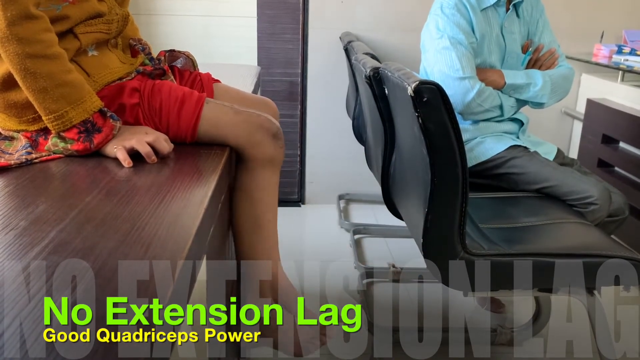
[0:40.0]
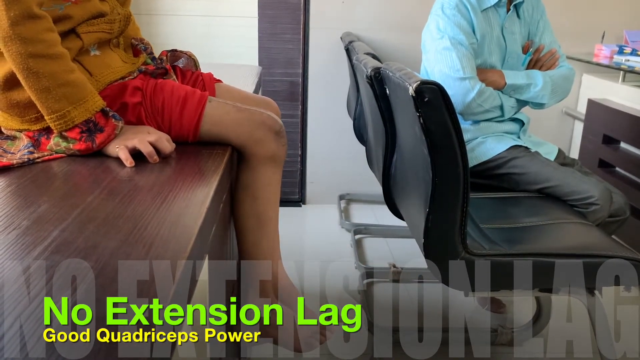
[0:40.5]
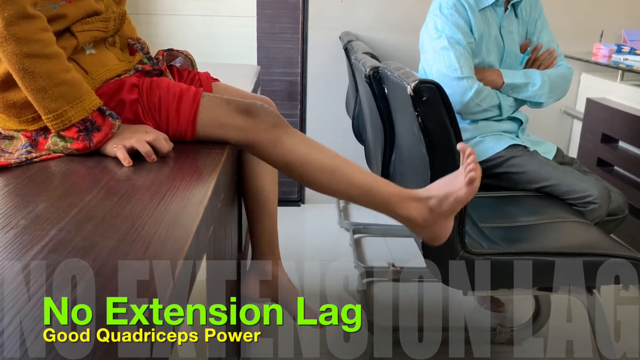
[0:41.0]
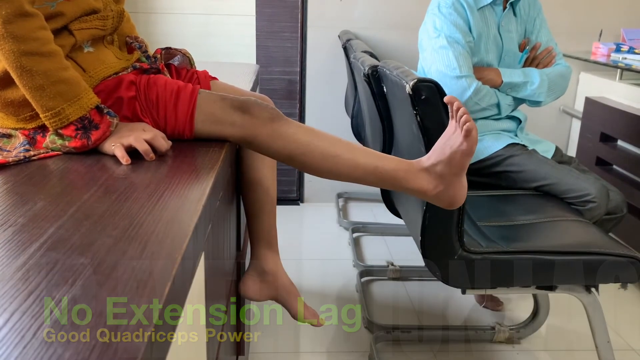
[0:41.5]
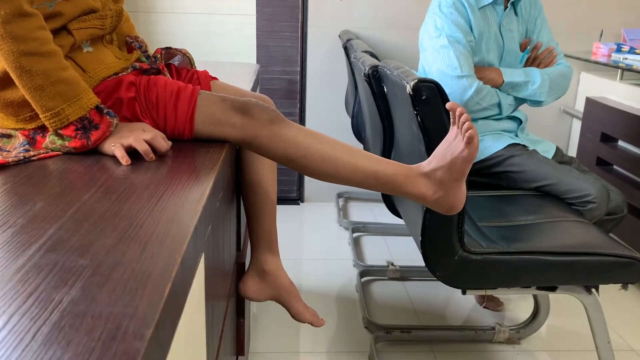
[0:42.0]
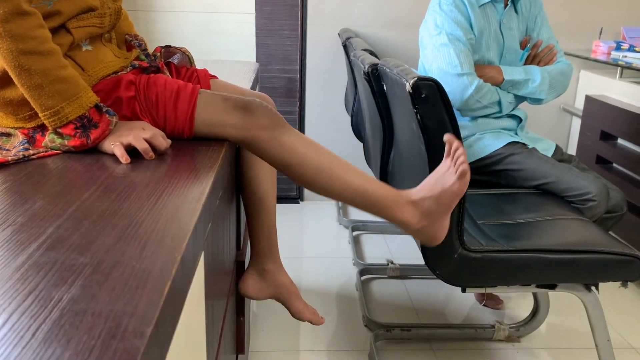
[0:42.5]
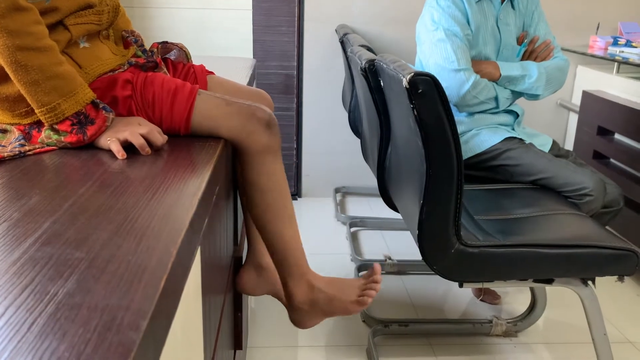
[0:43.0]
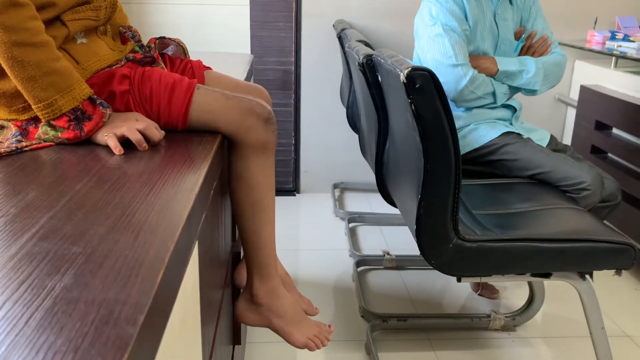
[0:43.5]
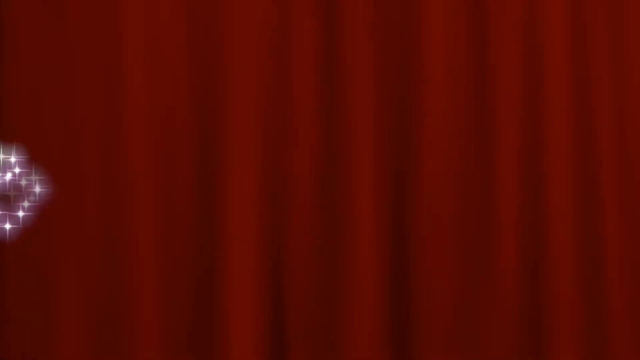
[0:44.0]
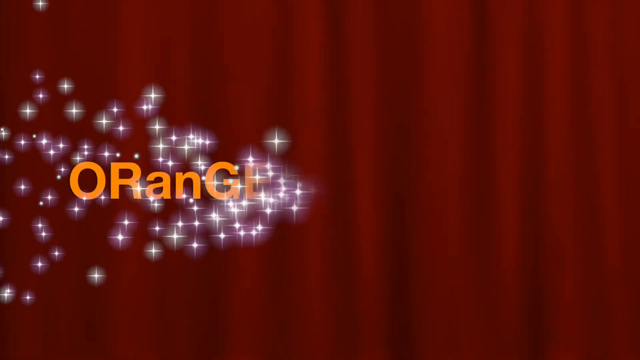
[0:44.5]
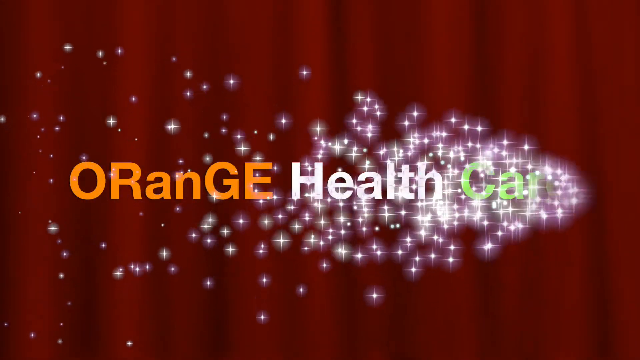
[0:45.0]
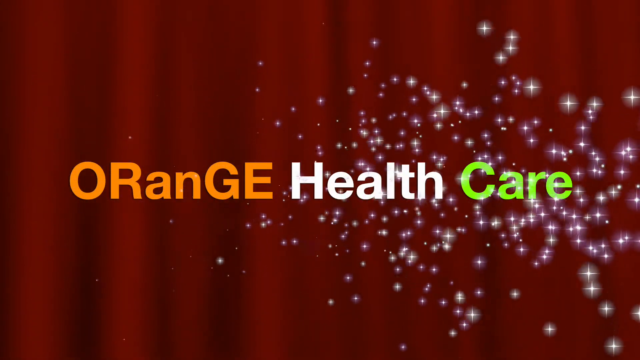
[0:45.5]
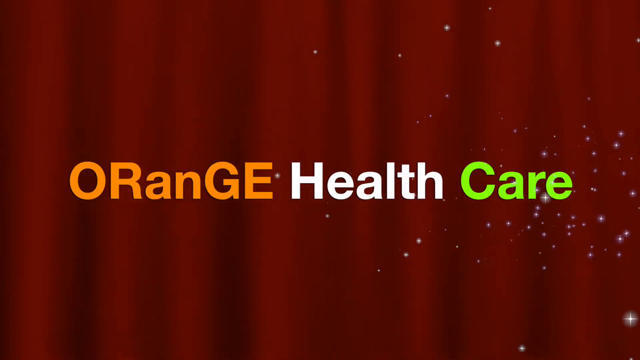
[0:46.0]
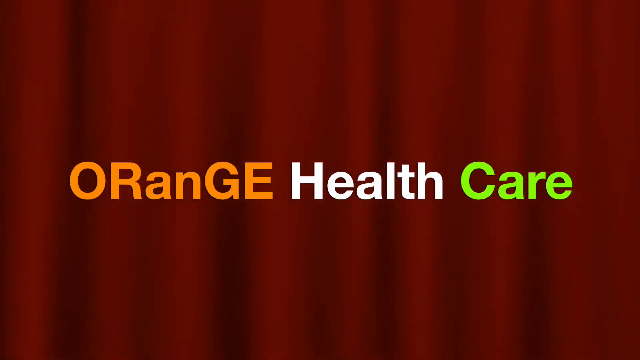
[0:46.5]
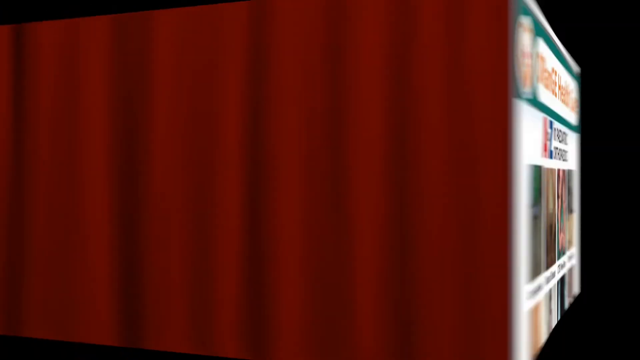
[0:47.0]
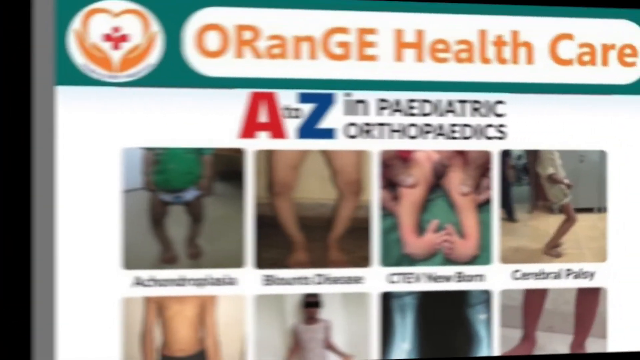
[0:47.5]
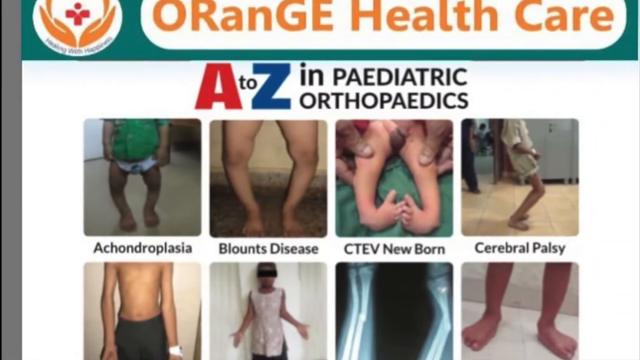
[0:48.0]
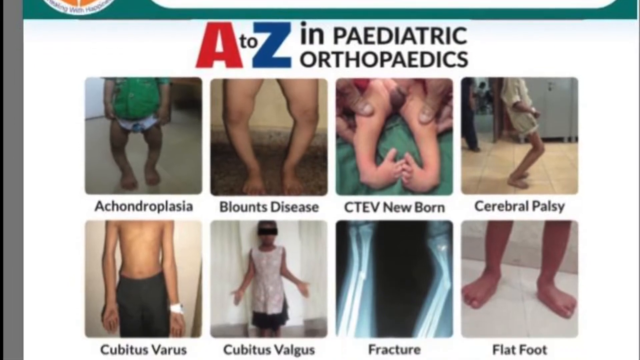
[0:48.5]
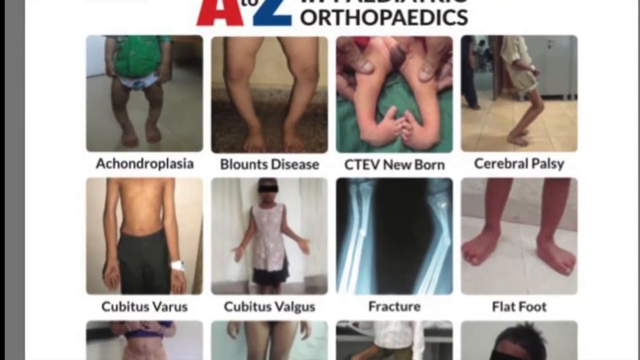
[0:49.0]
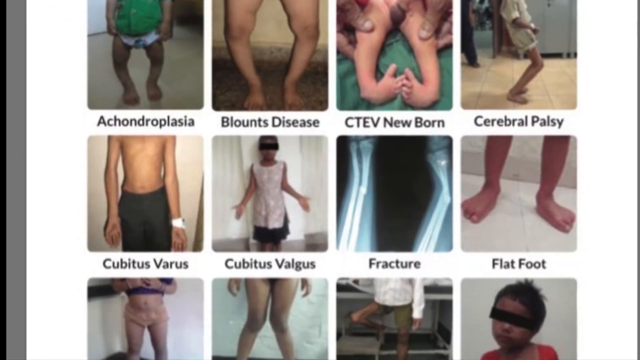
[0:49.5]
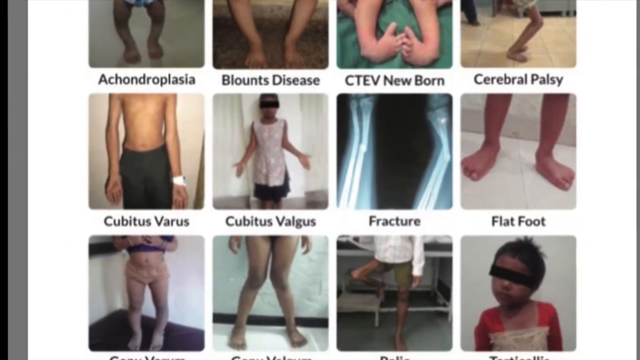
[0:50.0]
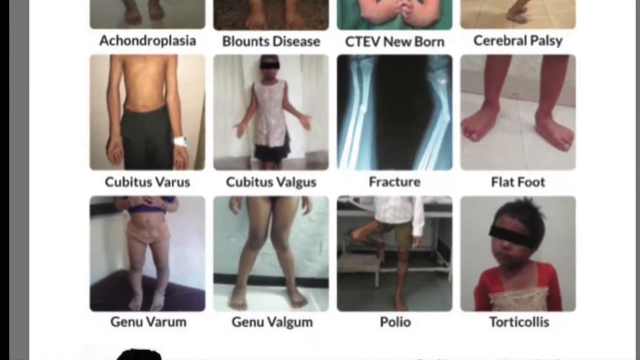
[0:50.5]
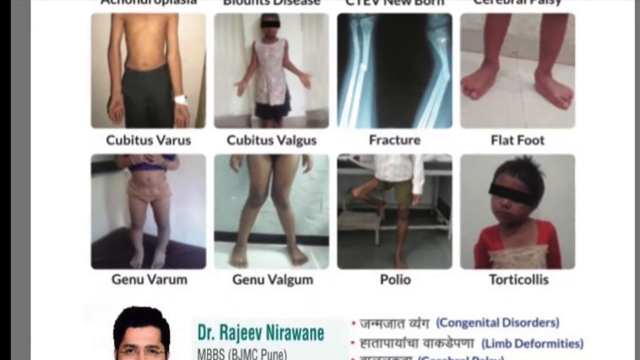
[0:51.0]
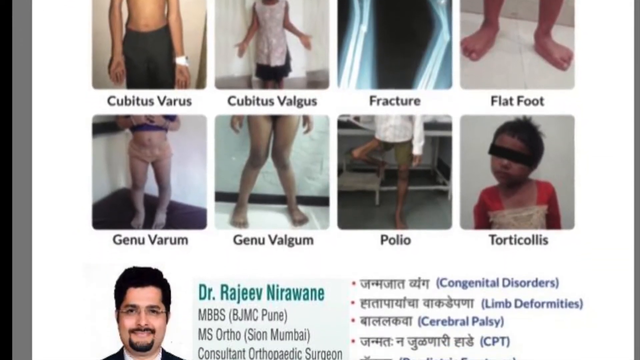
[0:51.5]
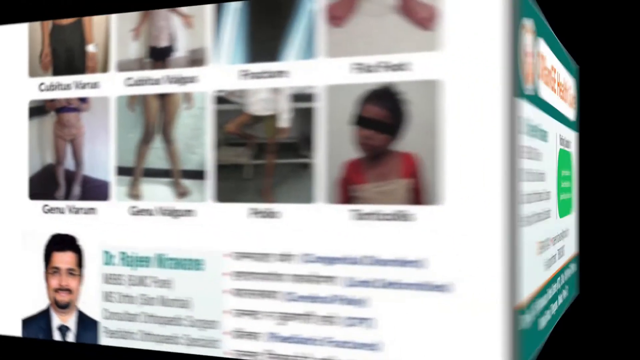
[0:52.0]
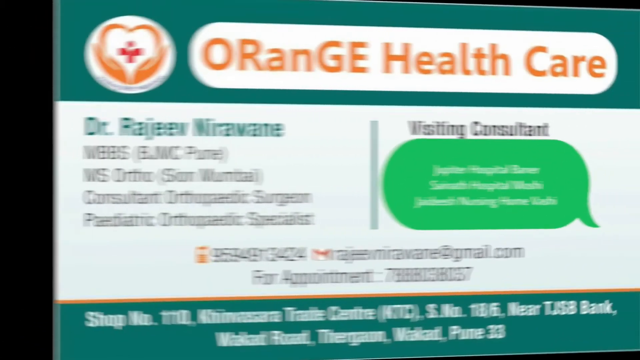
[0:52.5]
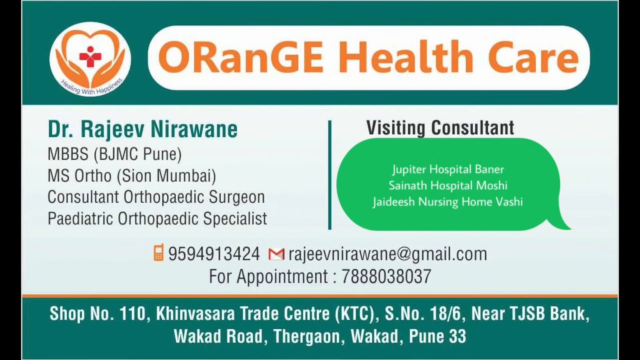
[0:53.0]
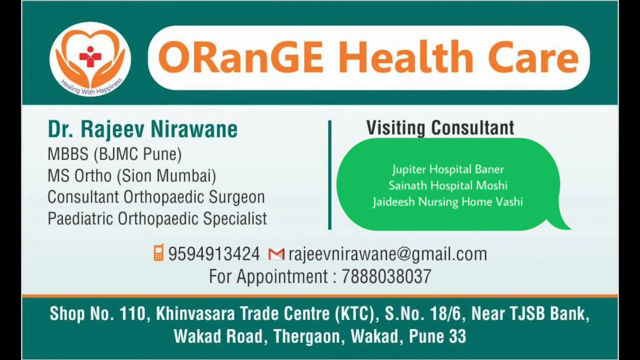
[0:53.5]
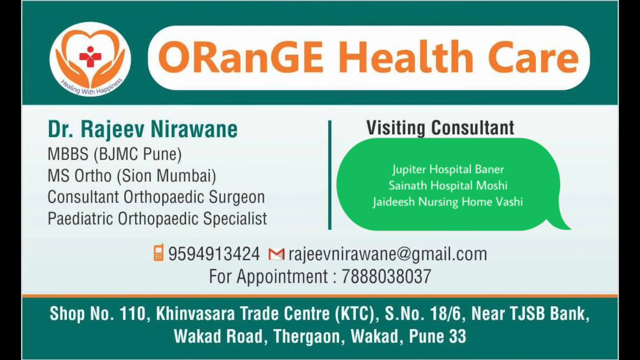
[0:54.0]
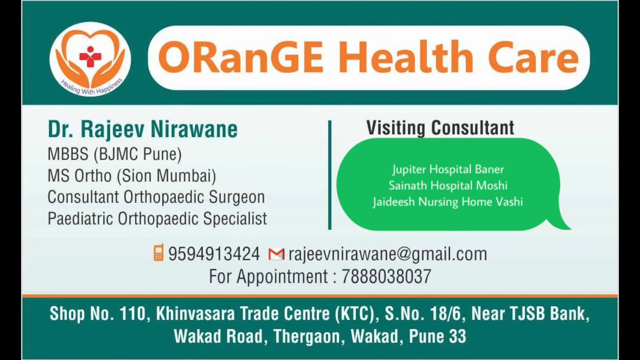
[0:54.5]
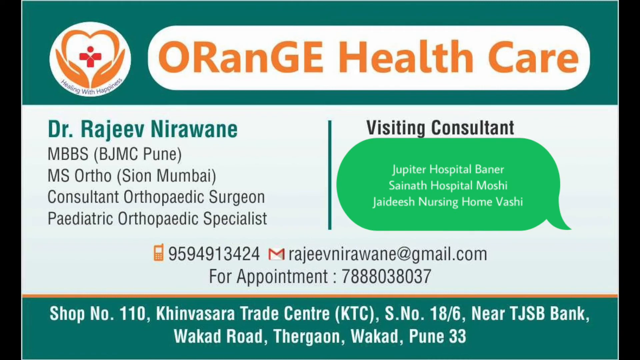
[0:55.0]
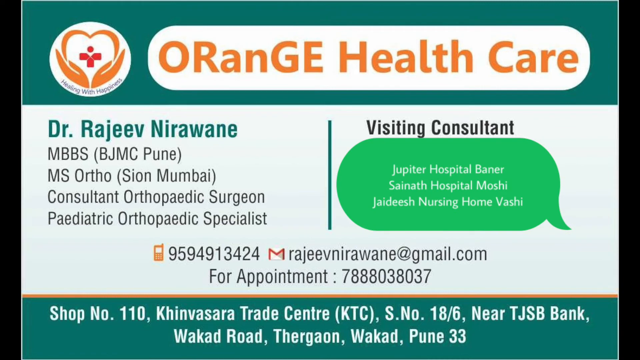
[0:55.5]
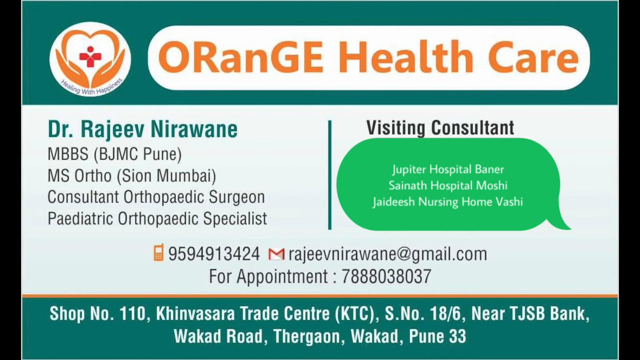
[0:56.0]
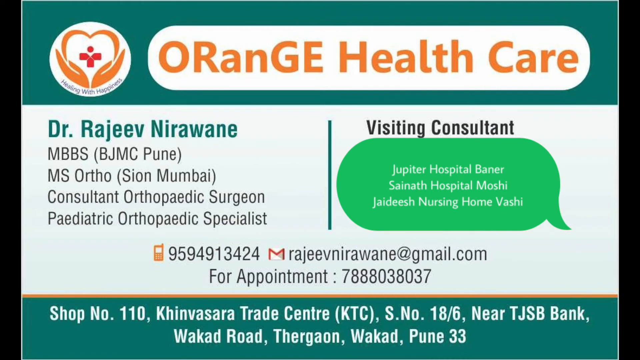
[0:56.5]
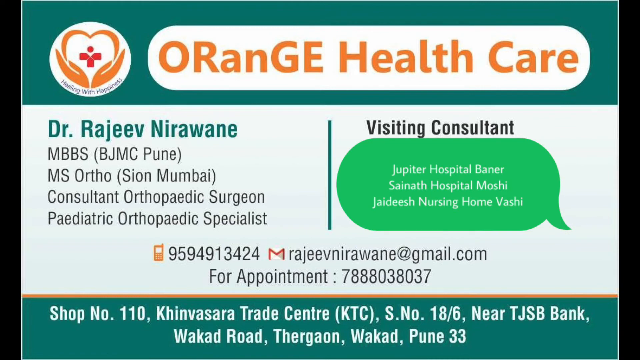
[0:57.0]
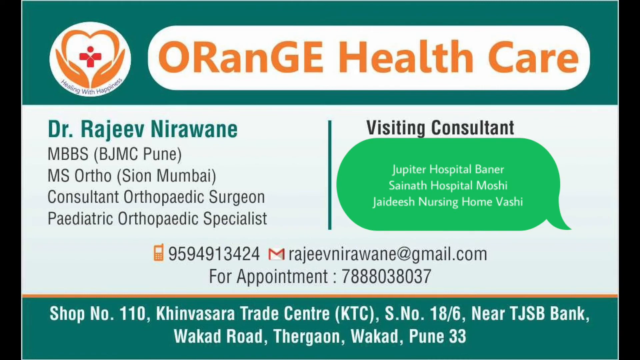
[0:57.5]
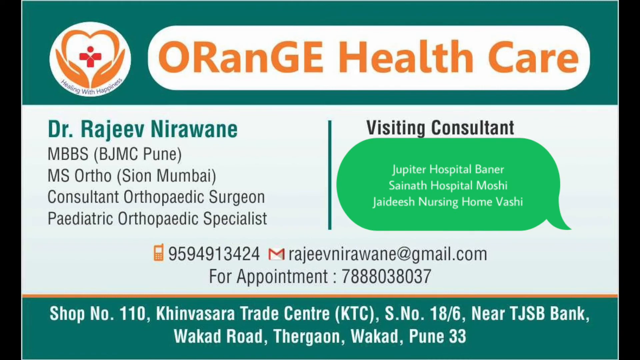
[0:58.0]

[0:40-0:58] The 10-year-old girl sits on a brown table, wearing red trousers rolled up so the surgeon can see the movement of her knee, and a yellow jacket with white flowers on it. The surgeon, in a blue shirt, sits looking at the knee with his arms folded. She shows good, powerful extension of her knee. A red shot follows with a caption reading "orange" in orange letters, "health" in white letters and "care" in green letters, with bright lights bursting behind. Next comes a picture from the orange health care website reading "A to Z in paediatric orthopaedics", showing various bone conditions such as achondroplasia, Blount's disease, CTEV, newborn and cerebral palsy. Shots of children with these conditions show how children can be affected by bone conditions.